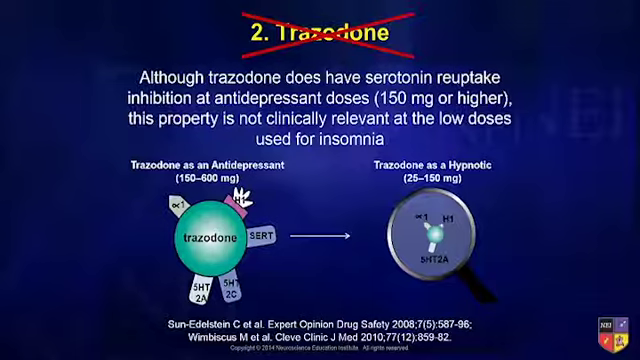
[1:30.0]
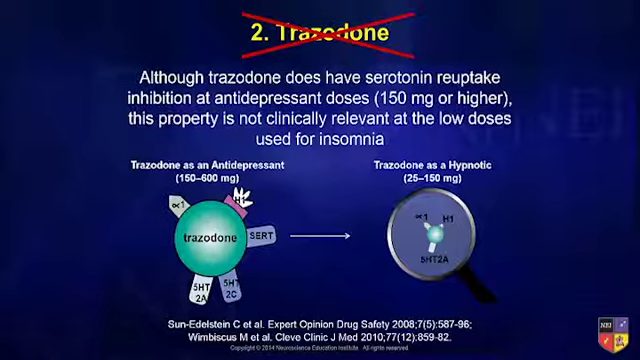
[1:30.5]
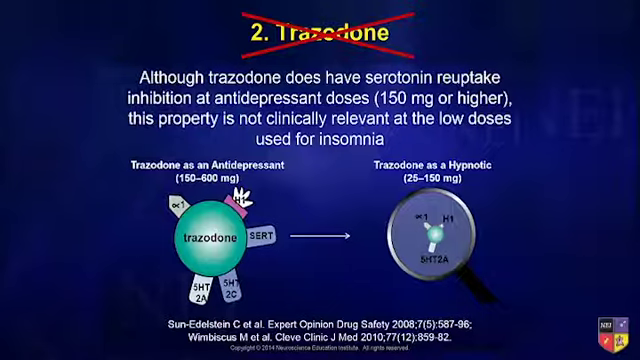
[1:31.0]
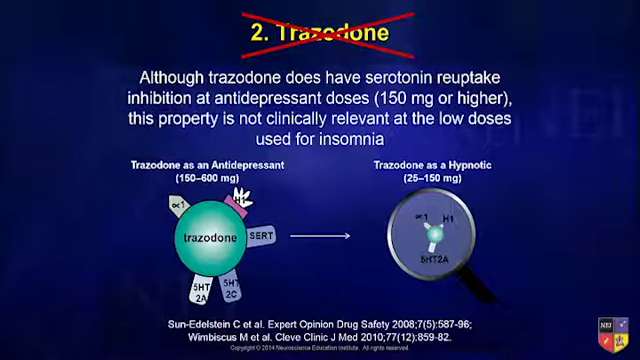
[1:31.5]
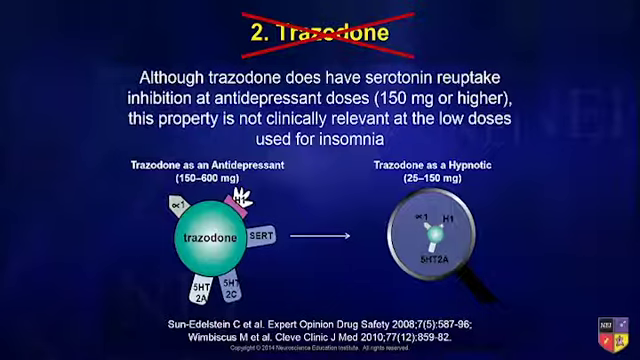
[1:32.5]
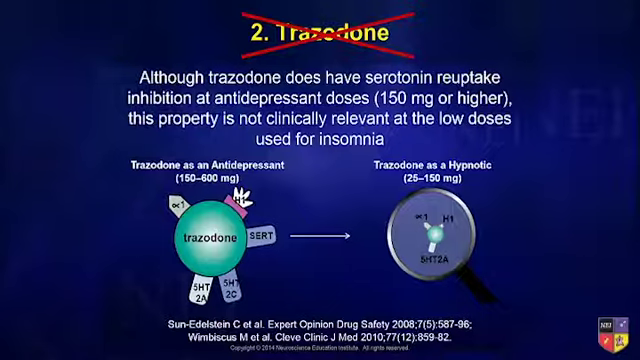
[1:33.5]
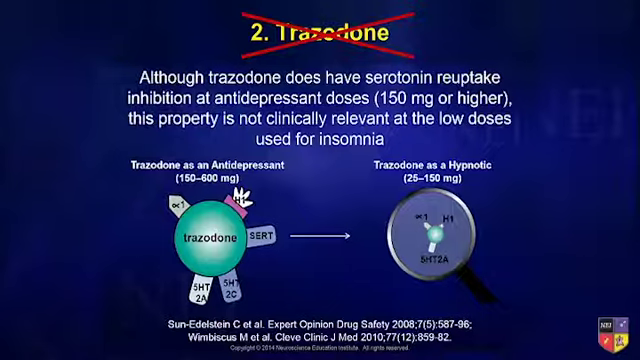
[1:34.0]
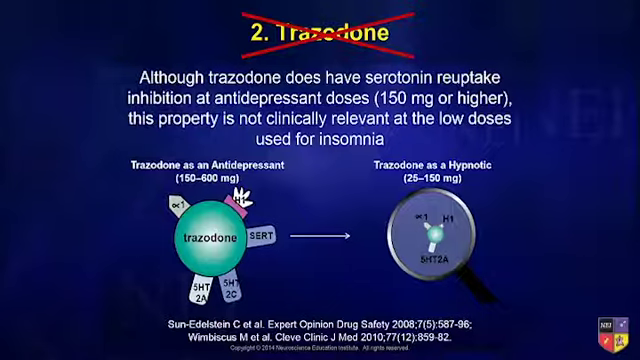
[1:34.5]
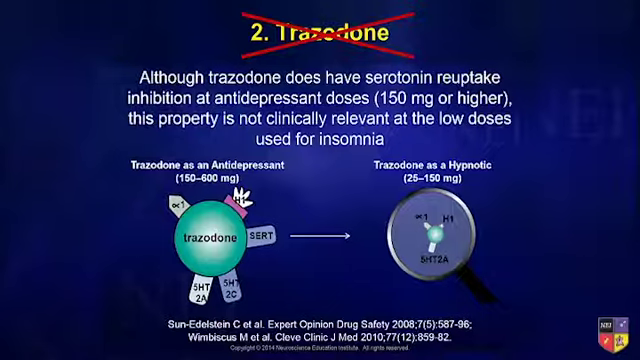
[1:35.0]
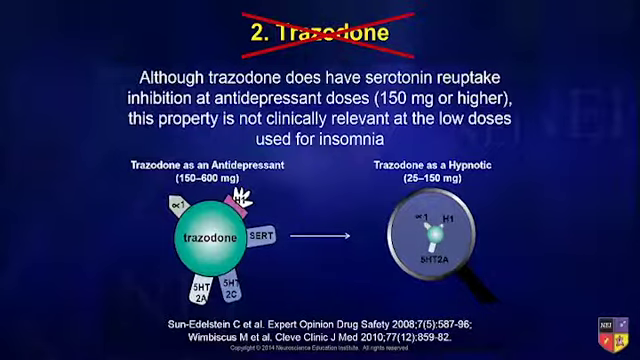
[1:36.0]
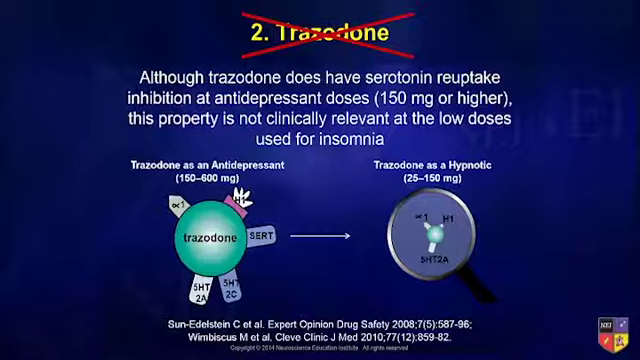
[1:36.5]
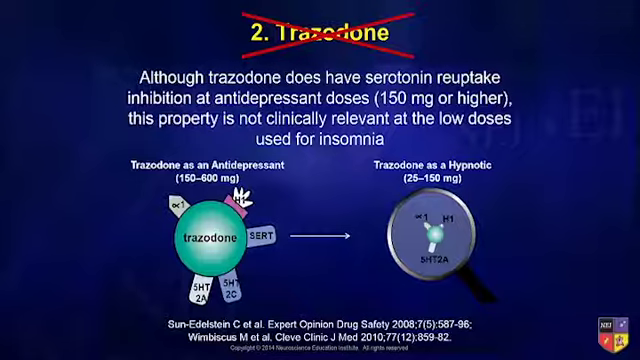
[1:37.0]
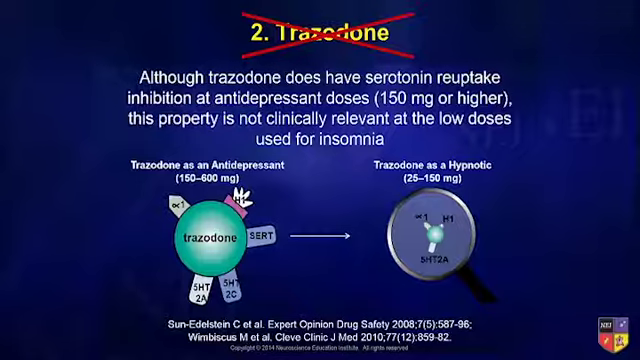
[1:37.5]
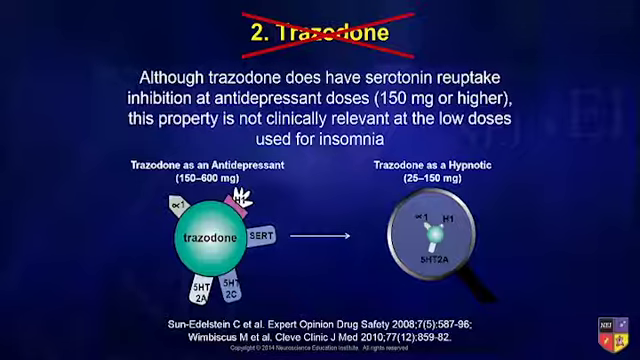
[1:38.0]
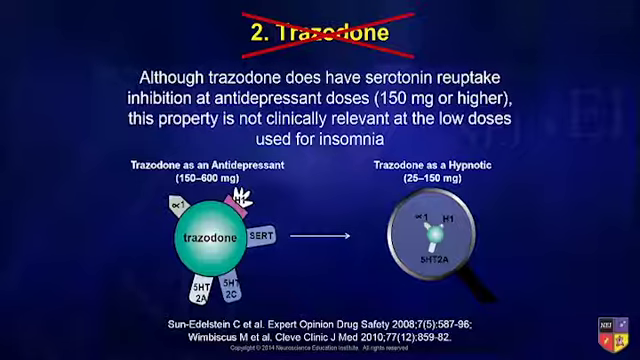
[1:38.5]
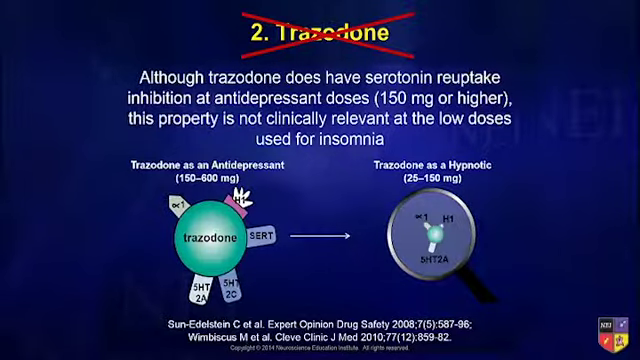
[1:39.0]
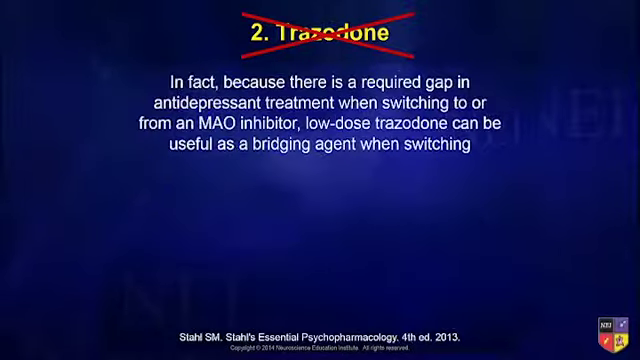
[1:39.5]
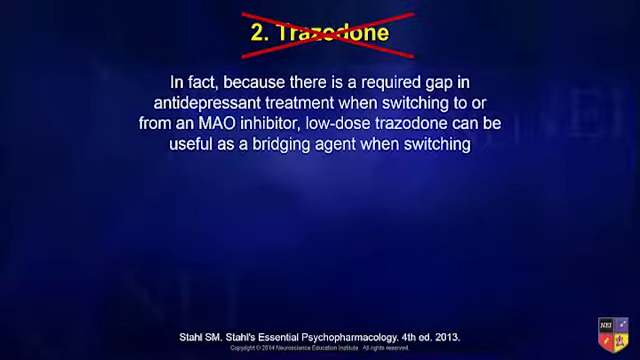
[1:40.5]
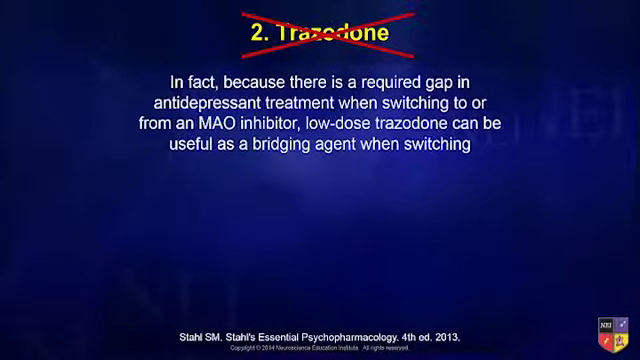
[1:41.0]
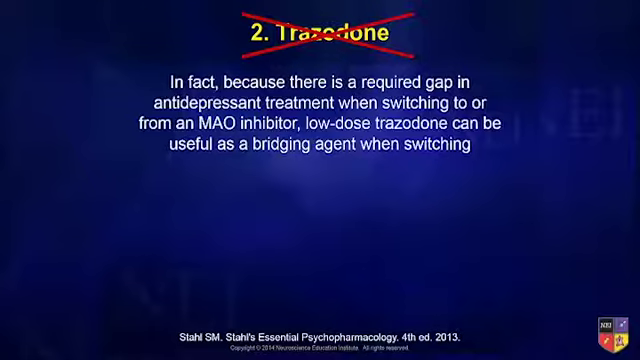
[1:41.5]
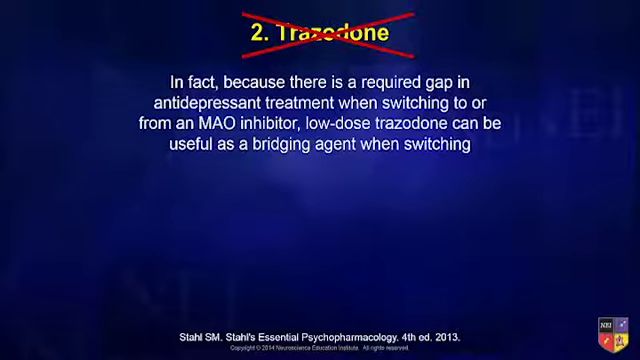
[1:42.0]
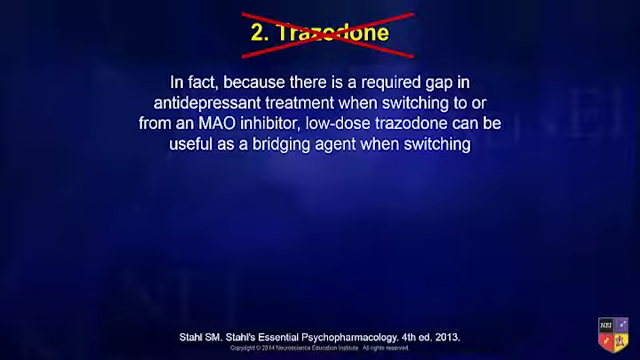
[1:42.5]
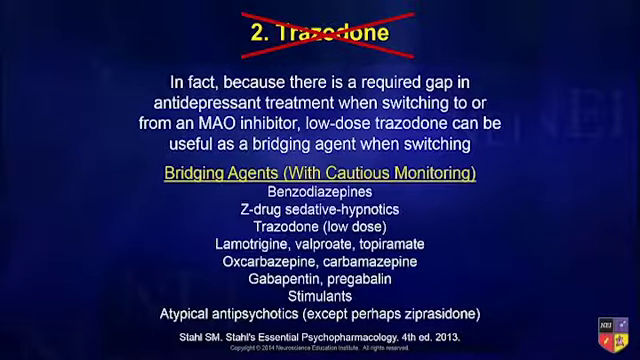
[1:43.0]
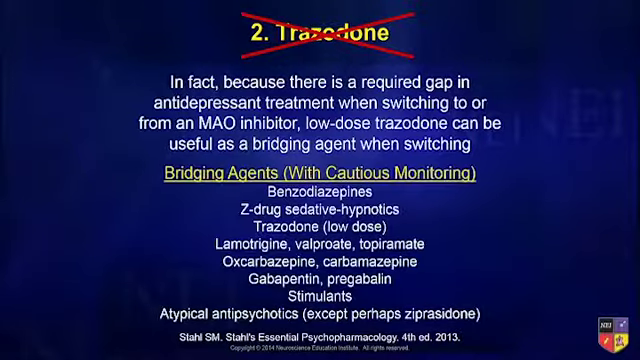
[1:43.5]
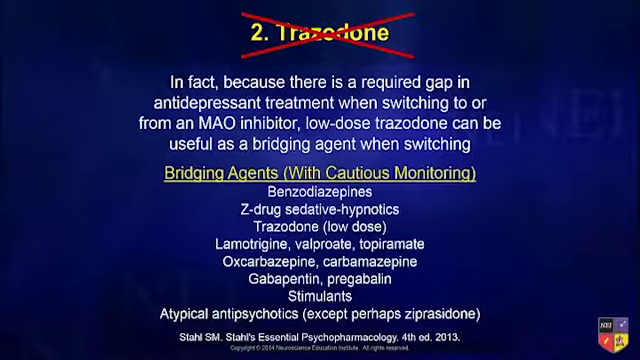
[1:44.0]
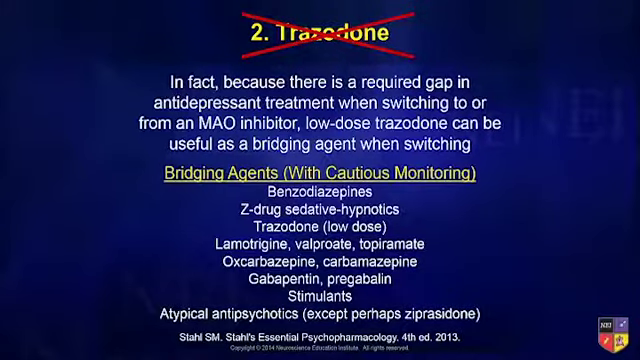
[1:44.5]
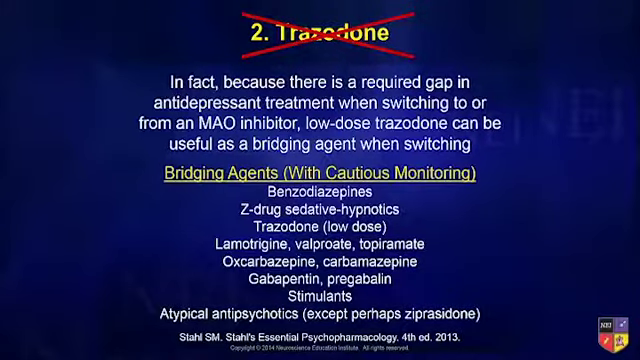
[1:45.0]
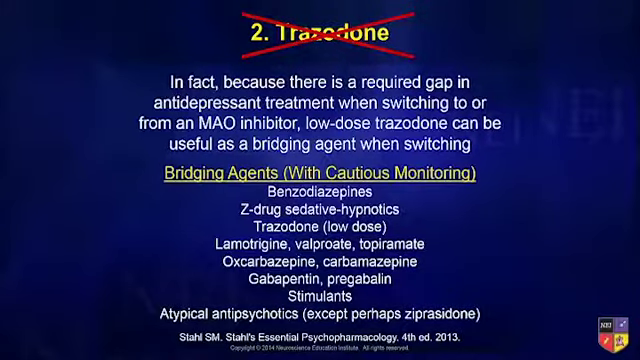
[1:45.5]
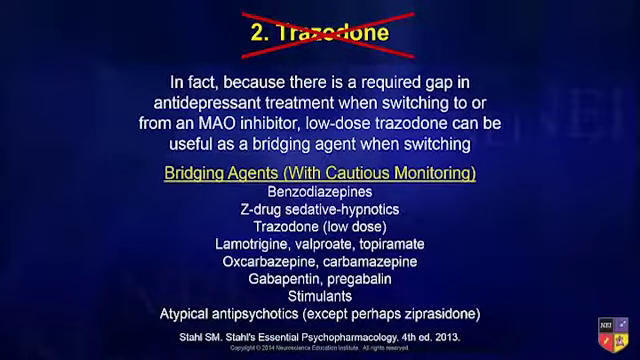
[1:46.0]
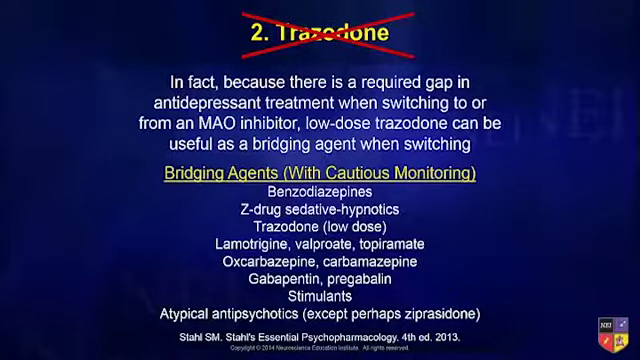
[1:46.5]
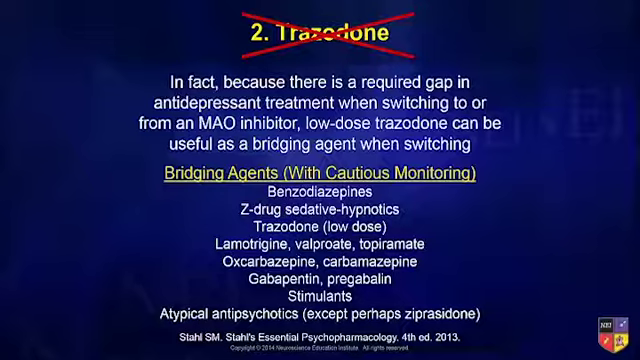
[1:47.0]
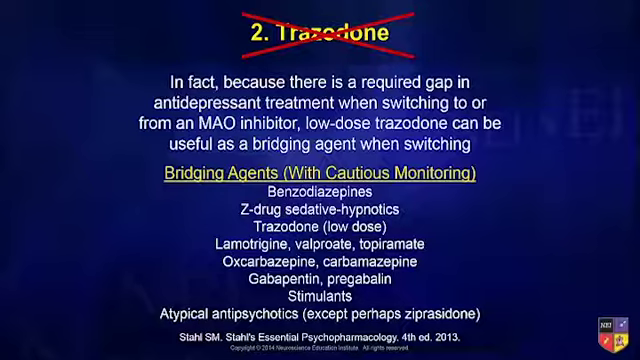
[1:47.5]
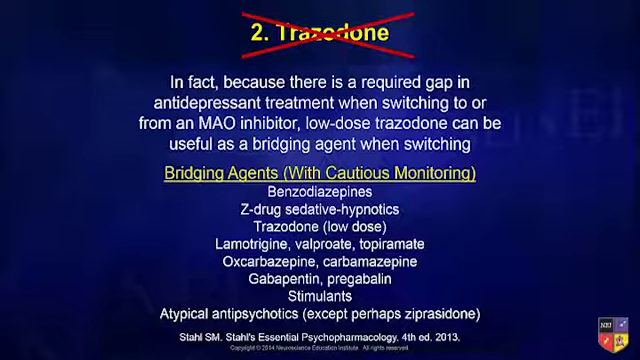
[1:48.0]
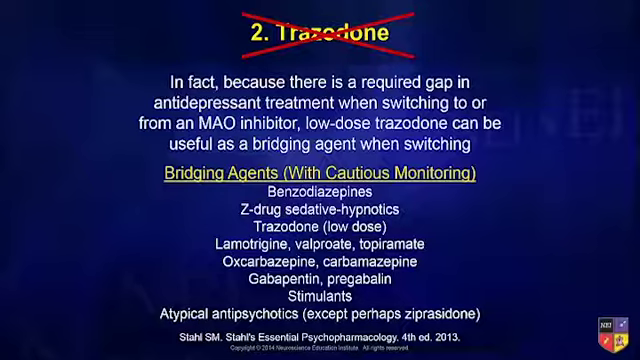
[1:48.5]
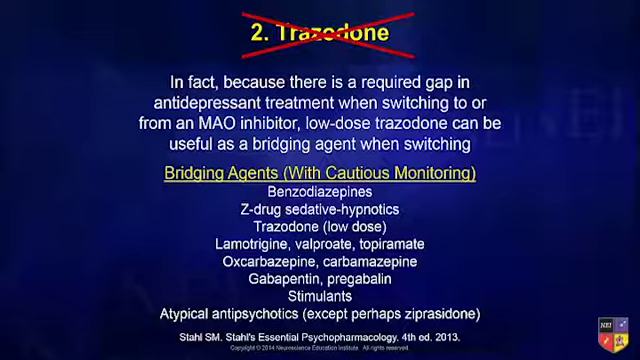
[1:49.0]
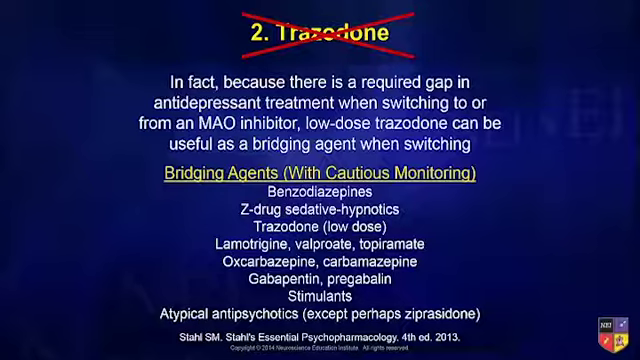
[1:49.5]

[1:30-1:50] The blue screen still shows the yellow "2 Trazodone" crossed out with a red cross, the white explanation underneath, the green trazodone circle and the magnifying glass with white text above each. The white text at the bottom has changed slightly to become citations for the articles the information comes from. The text in the middle and bottom of the screen then disappears and is replaced by white text reading "In fact, because there is a required gap in antidepressant treatment when switching to or from an MAO inhibitor, low-dose trazodone can be useful as a bridging agent when switching." Below it, underlined yellow text reads "bridging agents with cautious monitoring", followed by a list in white text: "benzodiazepines", "Z-drug sedative hypnotics", "trazodone low dose", "lamotrigone valproate topiramate", "oxcarbazepine carbamazepine", "gapopentin, pregabalin", "stimulant" and "atypical antipsychotics except perhaps ziprazadone".